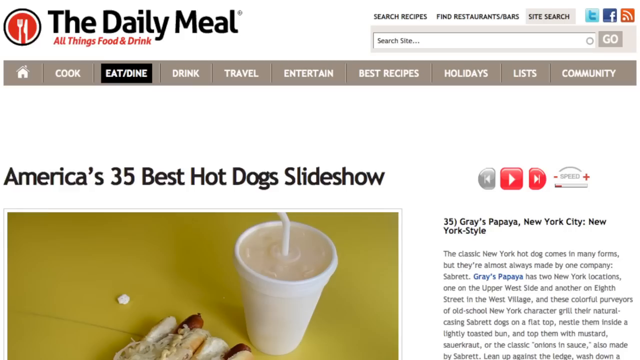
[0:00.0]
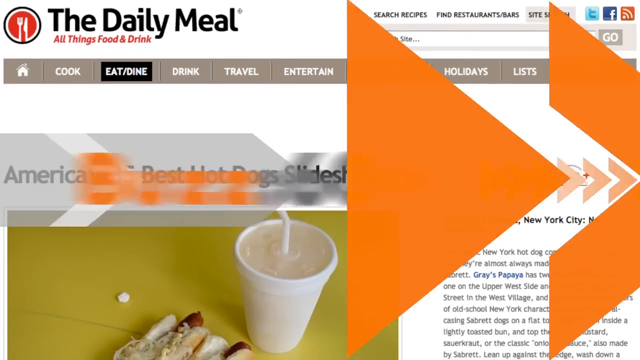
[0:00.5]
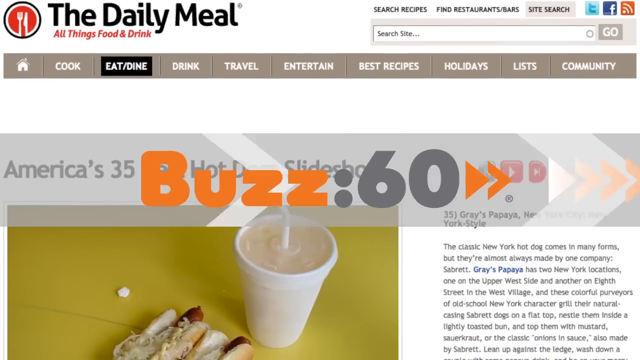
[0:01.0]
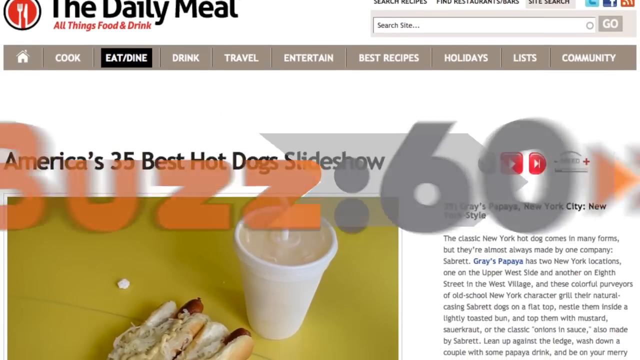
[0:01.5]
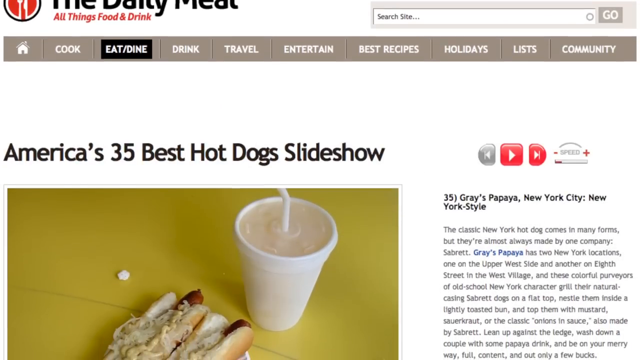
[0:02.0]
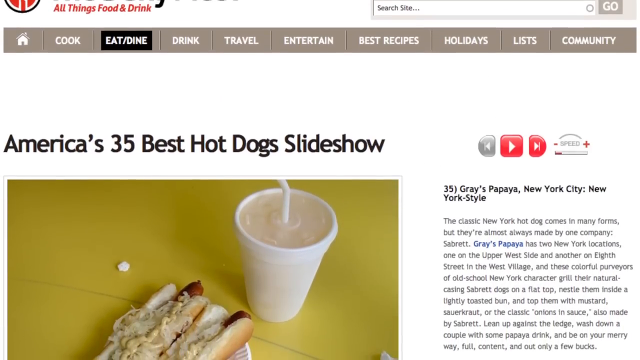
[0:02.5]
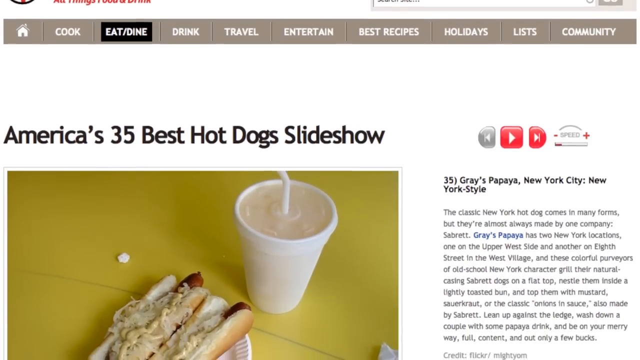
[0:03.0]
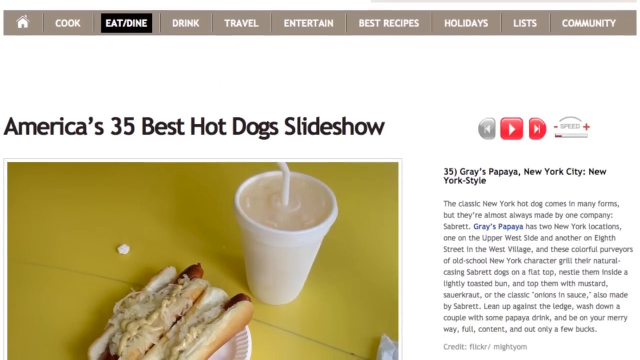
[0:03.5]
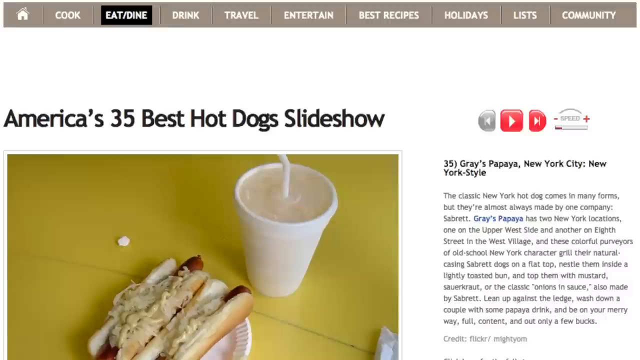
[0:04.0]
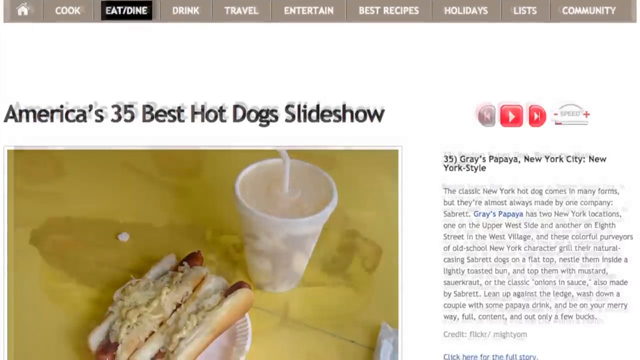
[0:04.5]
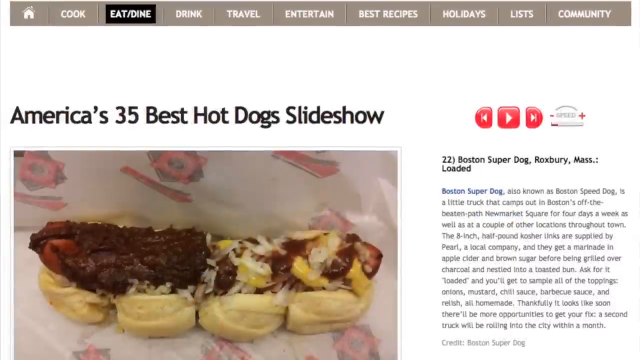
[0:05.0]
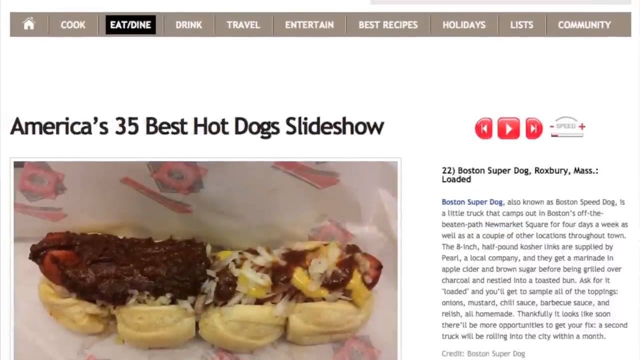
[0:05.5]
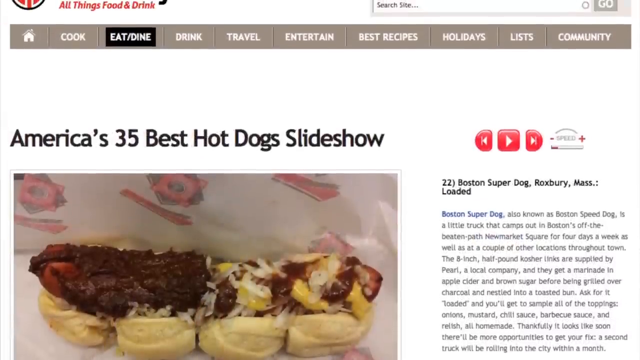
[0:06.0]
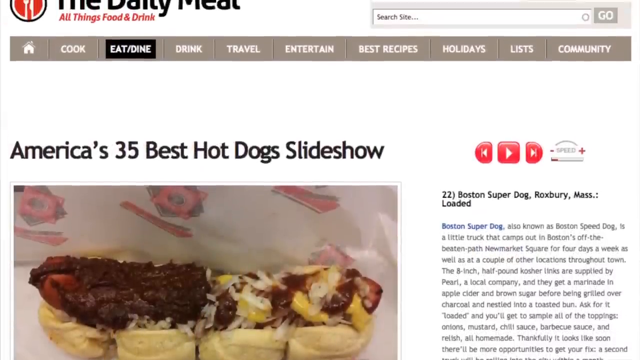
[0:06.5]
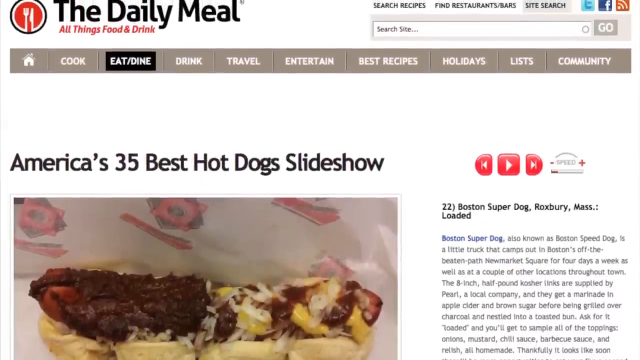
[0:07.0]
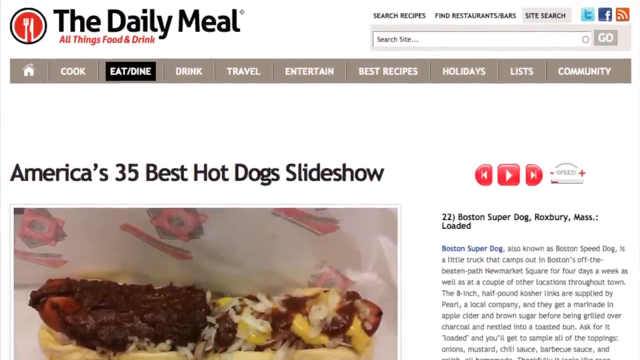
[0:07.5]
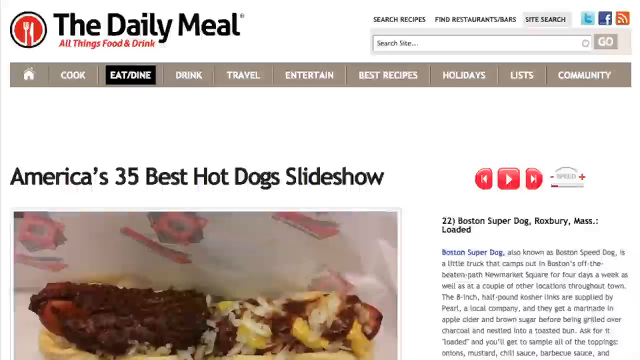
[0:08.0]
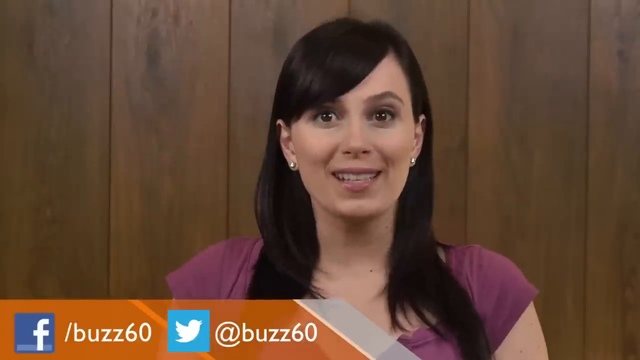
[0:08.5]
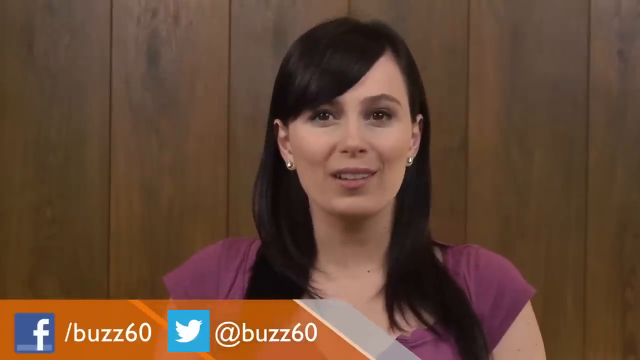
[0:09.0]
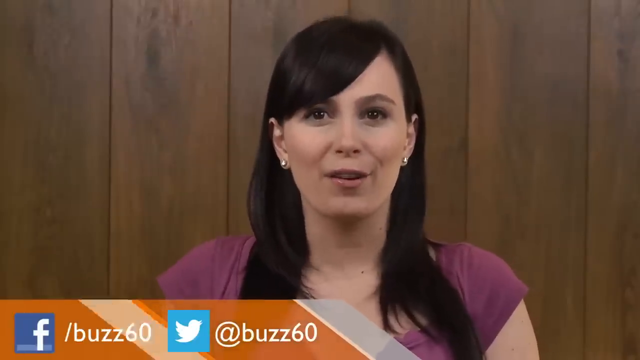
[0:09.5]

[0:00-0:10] The text "America's 35 Best Hot Dogs Live Show" and "The Daily Mail" appears, along with a hot dog with some kind of juice on it. The text "Facebook/Buzz60" and "Twitter Buzz60" is shown. Some text is in small letters that cannot be read. Written on screen is "the daily meal, all things food and drink, cook, eat, dine, drink, travel, entertain, best recipe, holiday, list, community". The text "America's top five best hot dogs" appears, followed by a hot dog filled with many things. A lady with black hair, wearing a purple top, slacks and lip gloss, is talking; she looks kind of beautiful.